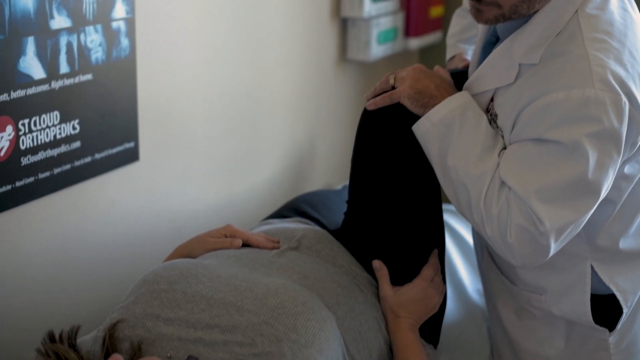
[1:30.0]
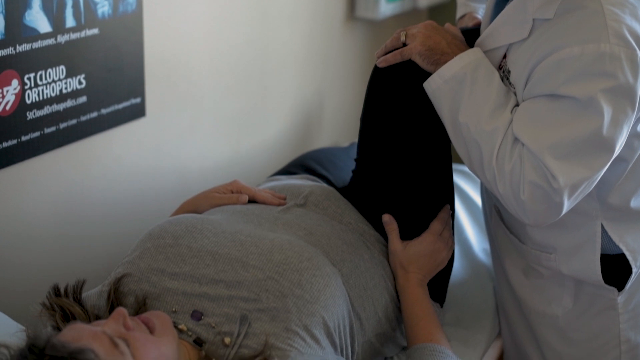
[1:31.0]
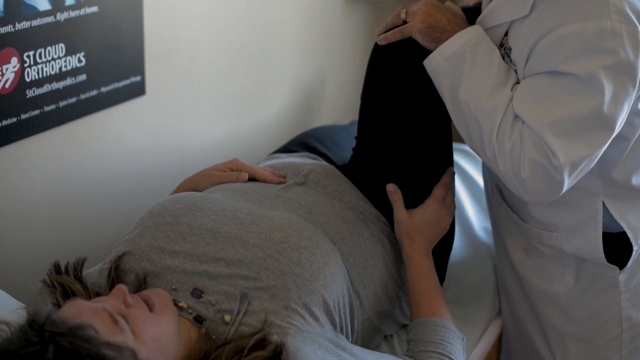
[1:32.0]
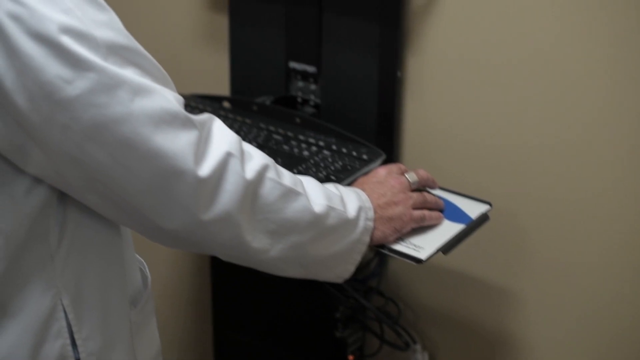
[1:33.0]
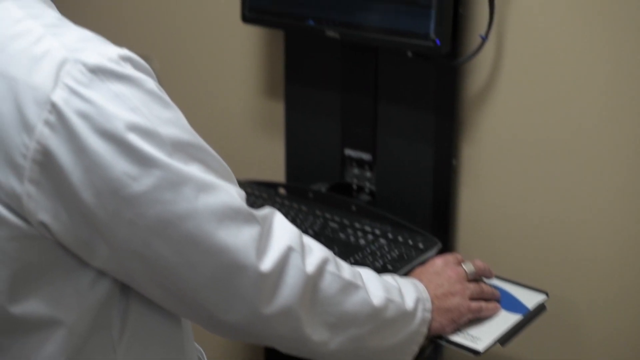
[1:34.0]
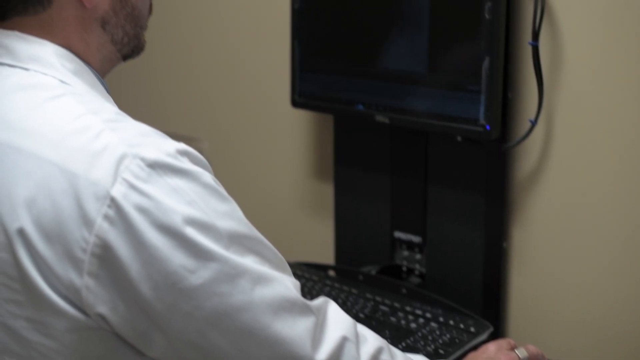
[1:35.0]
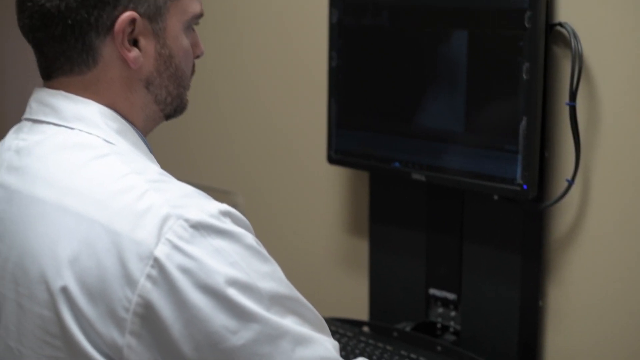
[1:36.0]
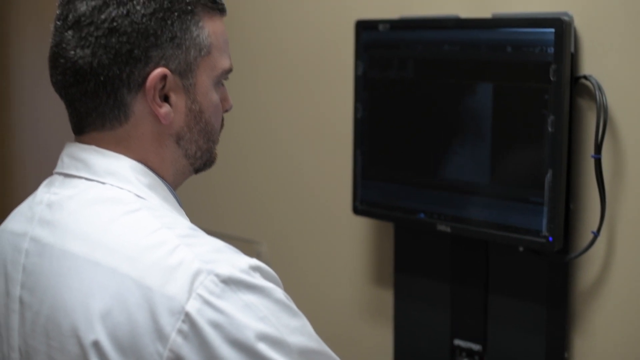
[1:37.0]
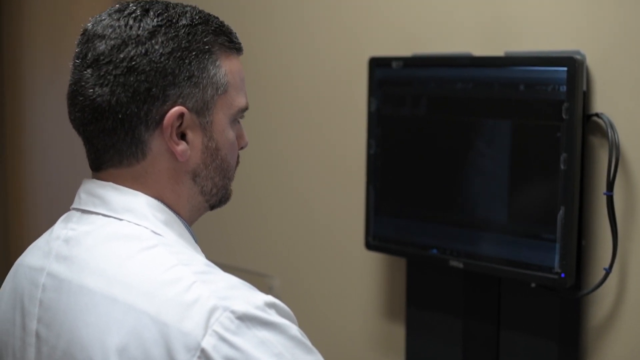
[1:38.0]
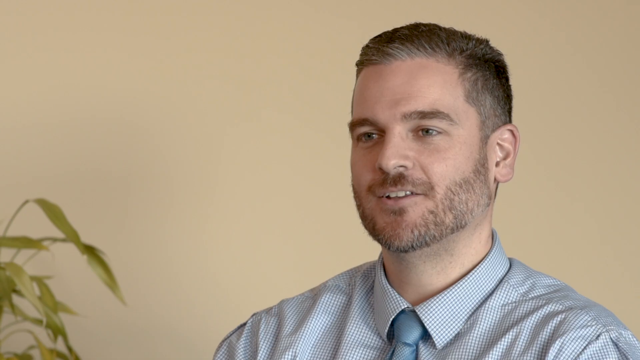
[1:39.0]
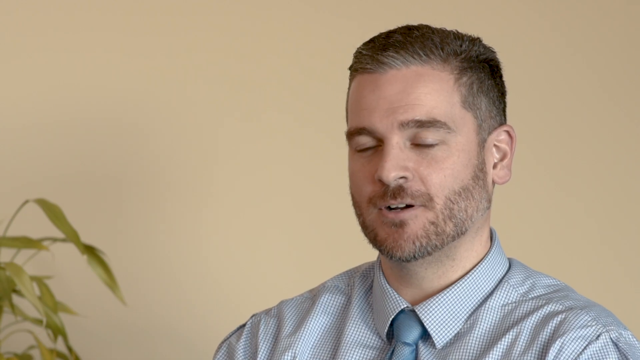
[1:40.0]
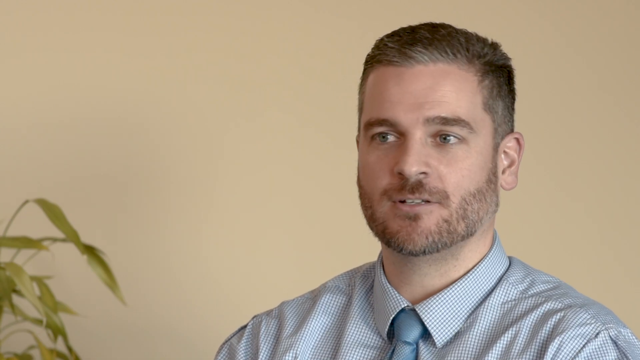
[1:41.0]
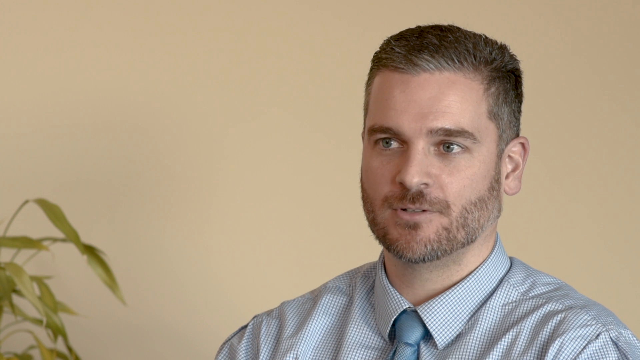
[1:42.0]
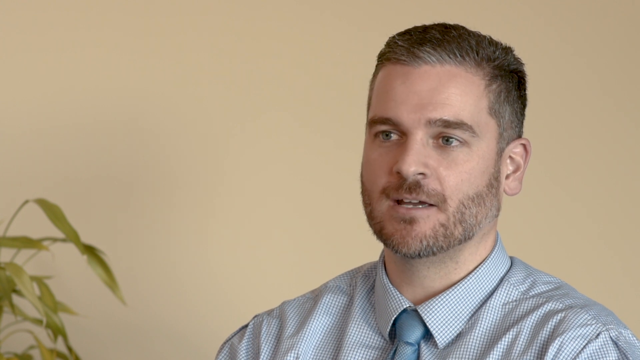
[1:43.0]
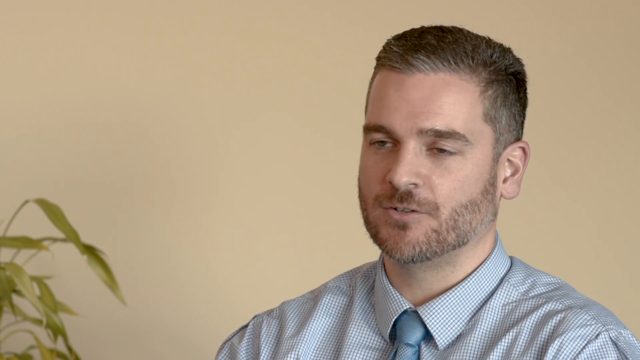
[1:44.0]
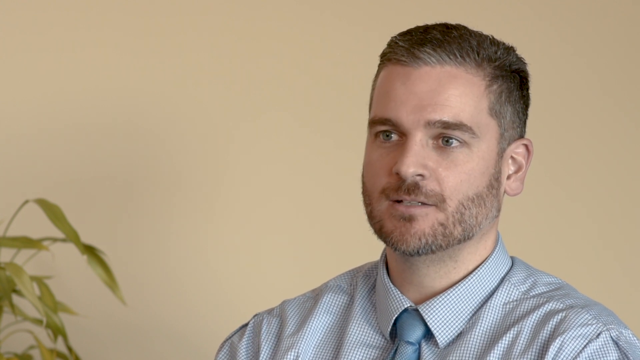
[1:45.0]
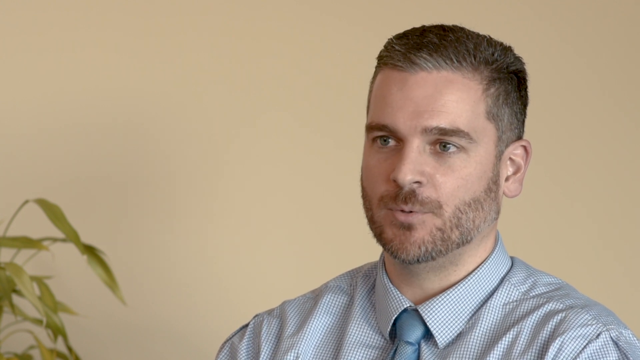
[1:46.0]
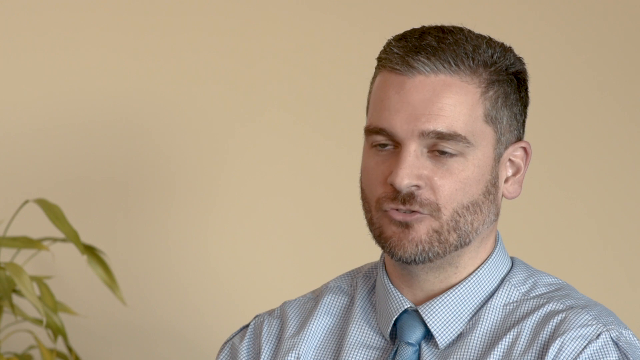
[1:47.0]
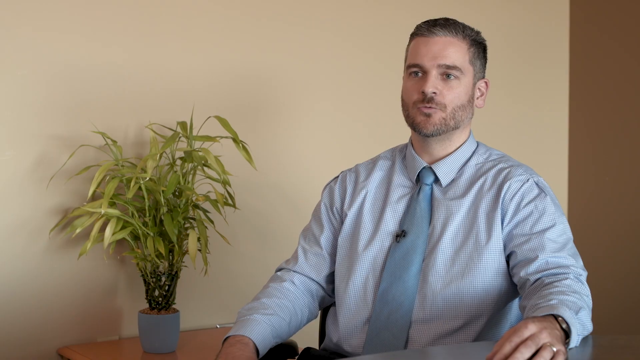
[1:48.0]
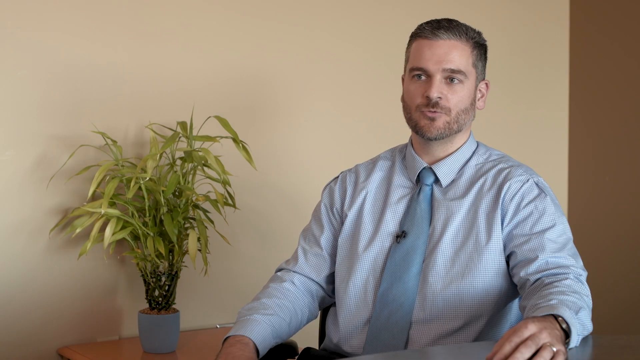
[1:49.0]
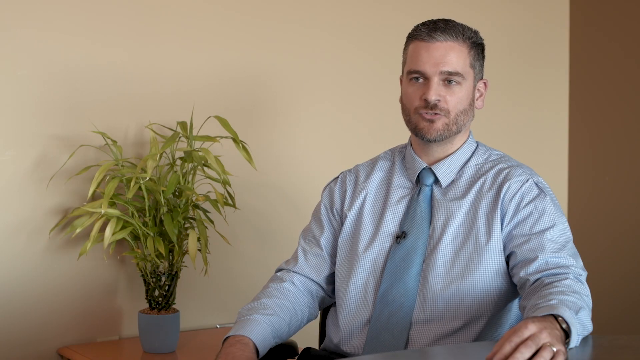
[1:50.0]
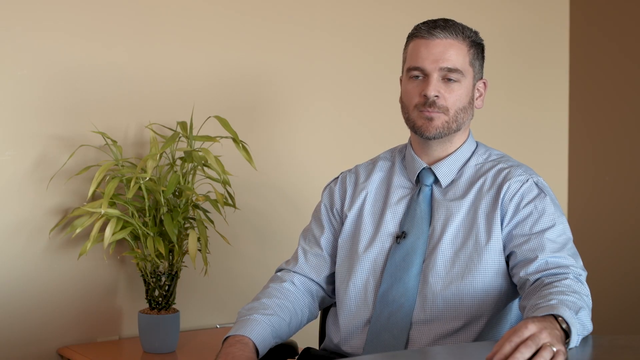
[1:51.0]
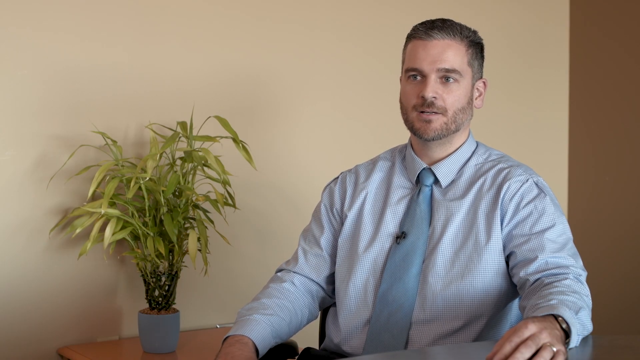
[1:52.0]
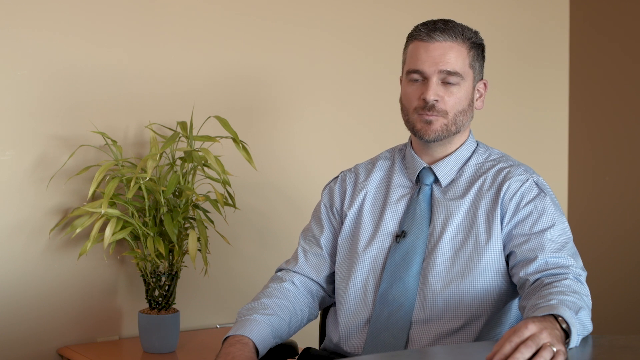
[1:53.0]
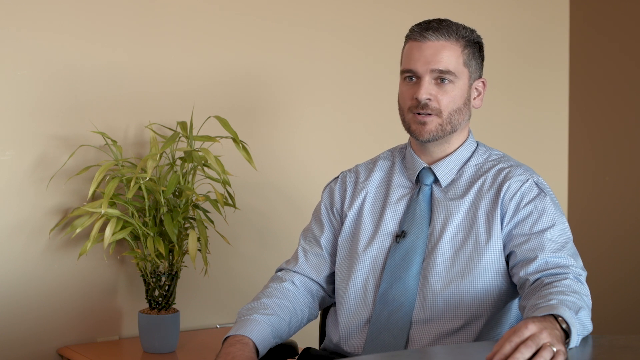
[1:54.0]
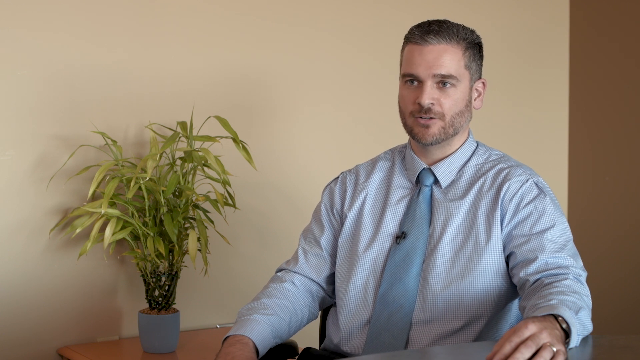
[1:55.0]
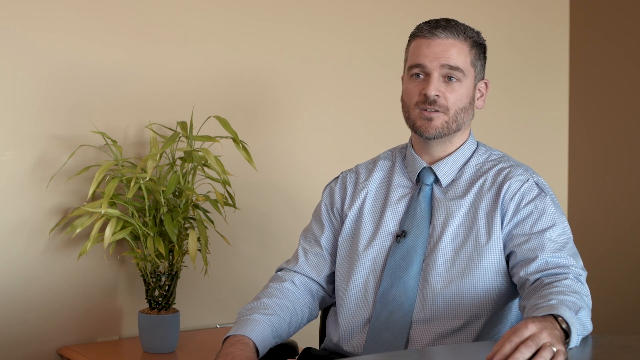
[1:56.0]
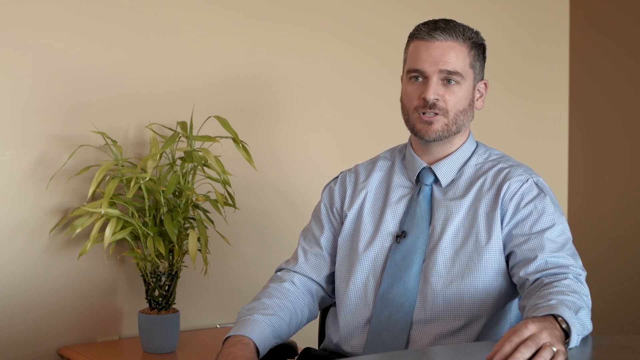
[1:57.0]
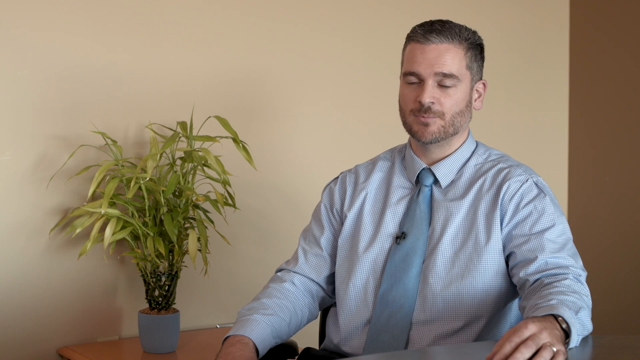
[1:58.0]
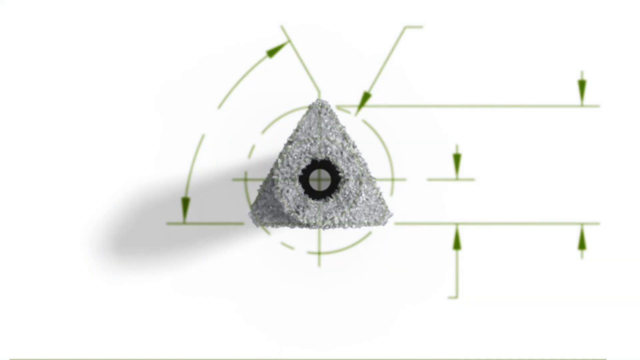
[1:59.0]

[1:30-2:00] The patient, in black pants and a shirt that looks like it could be a grayish greenish color, is lying down on the left side of the screen. Her left hand is on her stomach and her right hand is at the top of her thigh, kind of as if supporting it. The doctor holds her leg and pushes it back, apparently trying to see where the pain is. The video then shows him on a black monitor on a yellow wall, the same wall color as where he is interviewed, and he is talking again. The camera zooms into his face, then zooms out. He is sitting in a chair that cannot really be seen, with his arm on a table whose brown surface is partly visible.